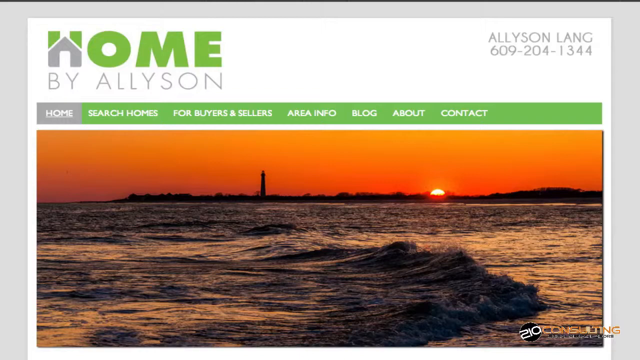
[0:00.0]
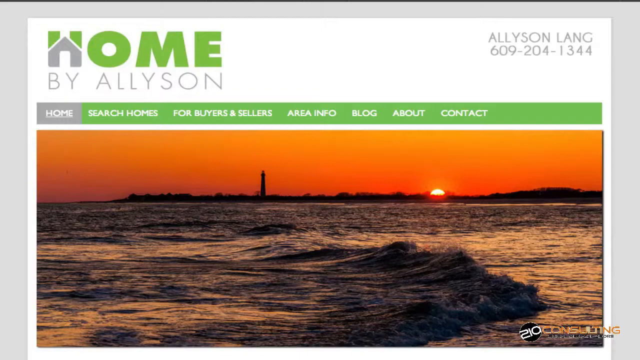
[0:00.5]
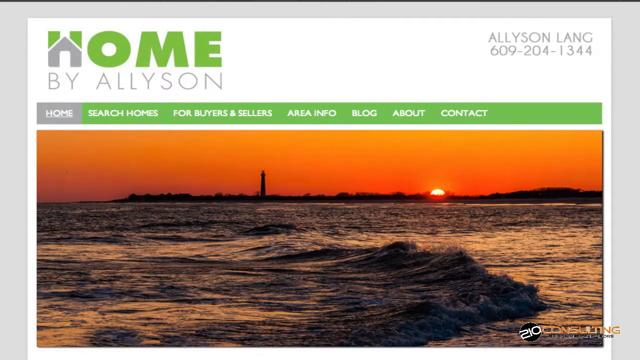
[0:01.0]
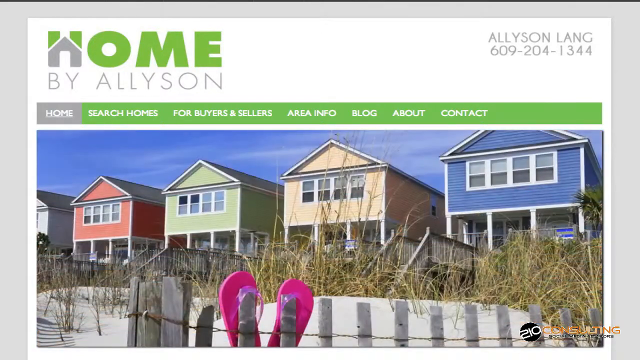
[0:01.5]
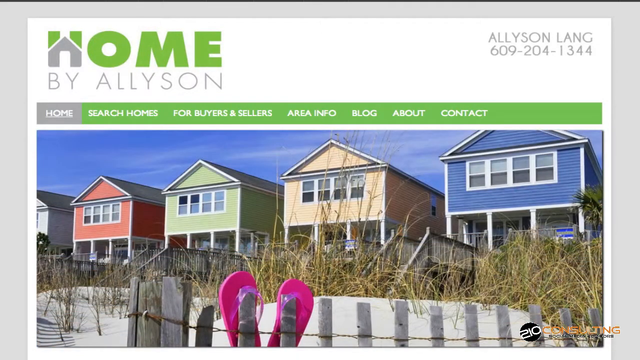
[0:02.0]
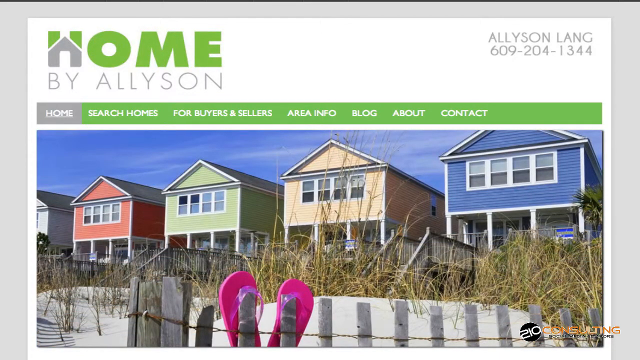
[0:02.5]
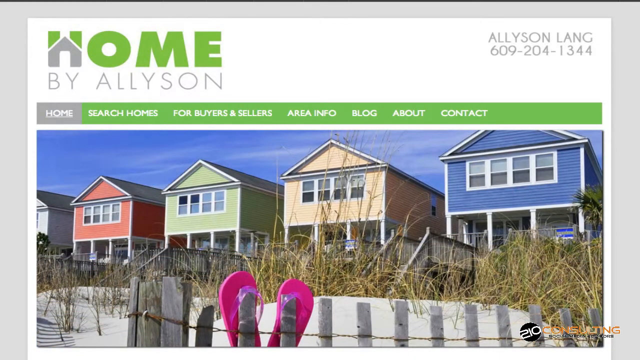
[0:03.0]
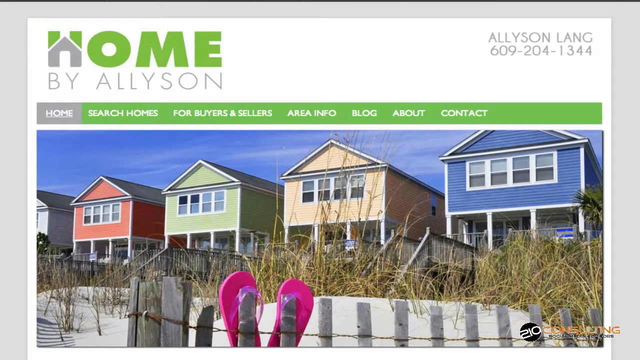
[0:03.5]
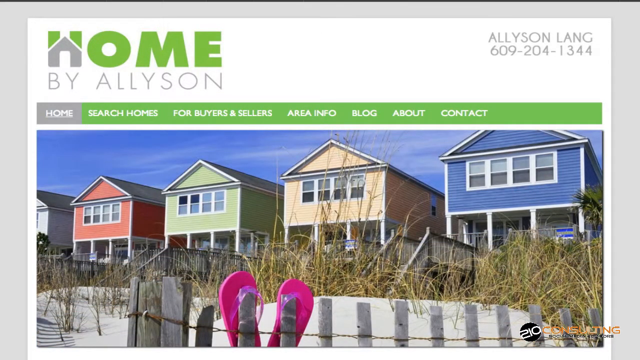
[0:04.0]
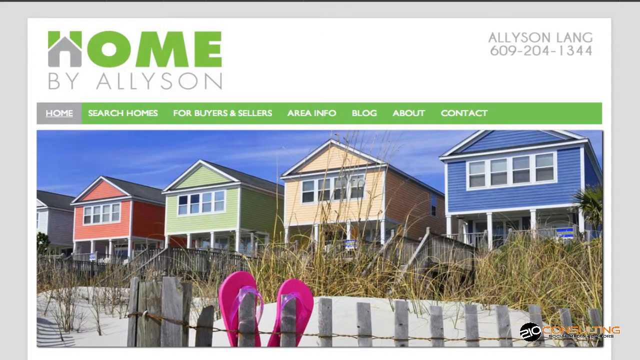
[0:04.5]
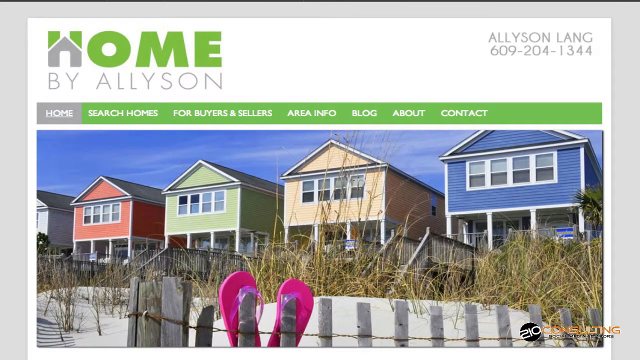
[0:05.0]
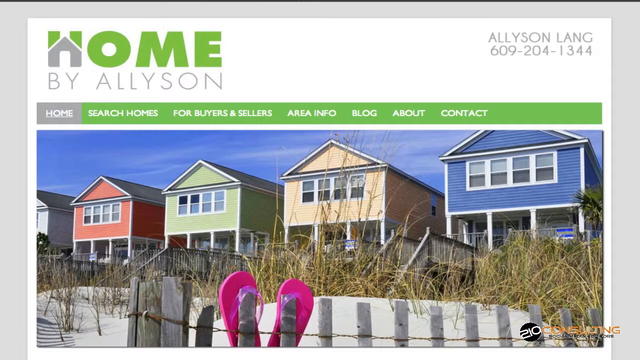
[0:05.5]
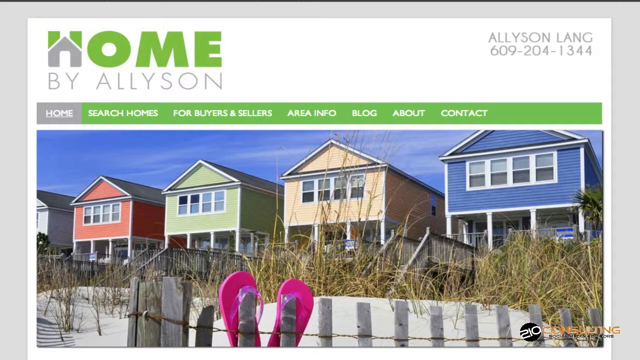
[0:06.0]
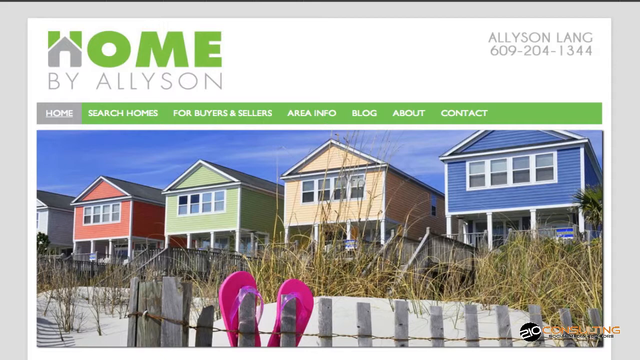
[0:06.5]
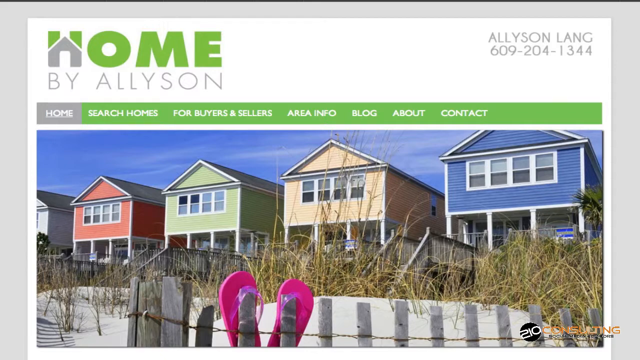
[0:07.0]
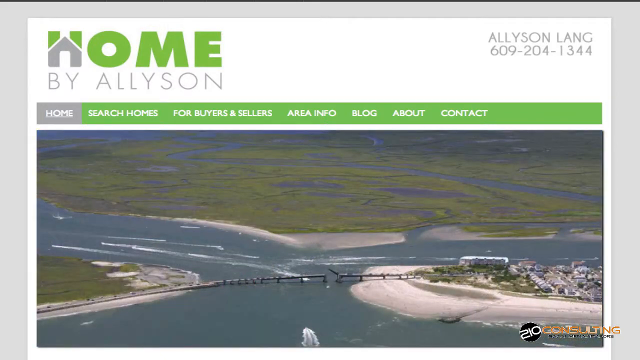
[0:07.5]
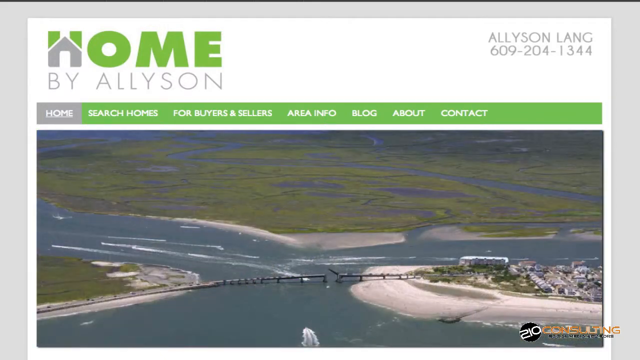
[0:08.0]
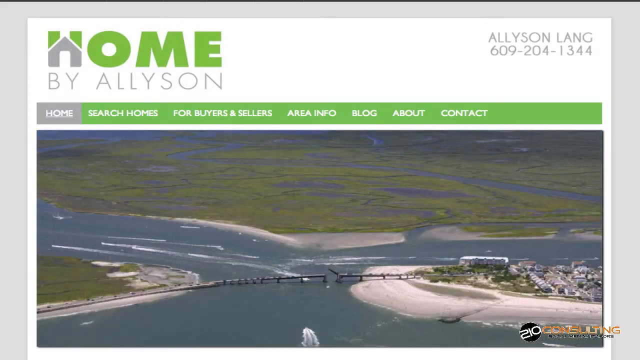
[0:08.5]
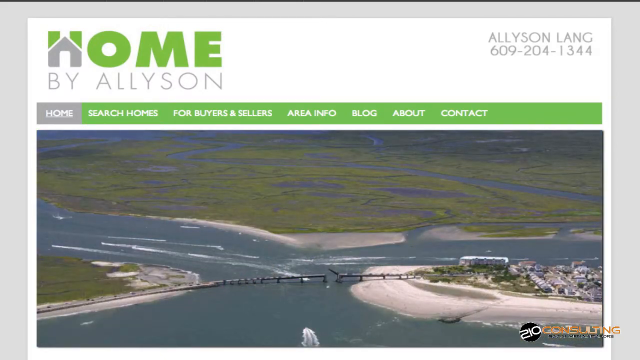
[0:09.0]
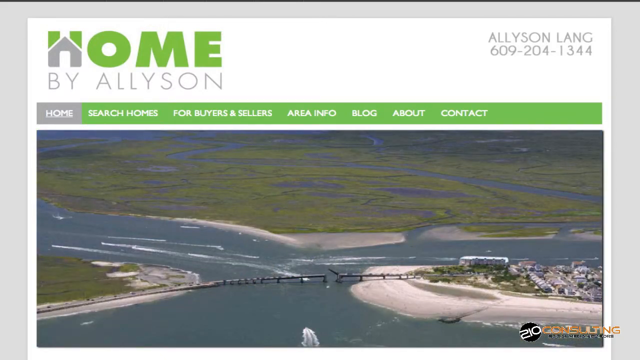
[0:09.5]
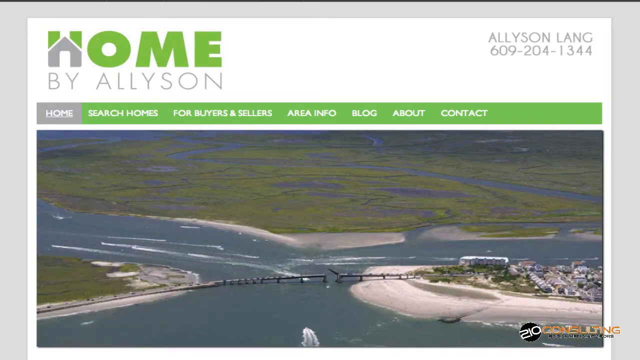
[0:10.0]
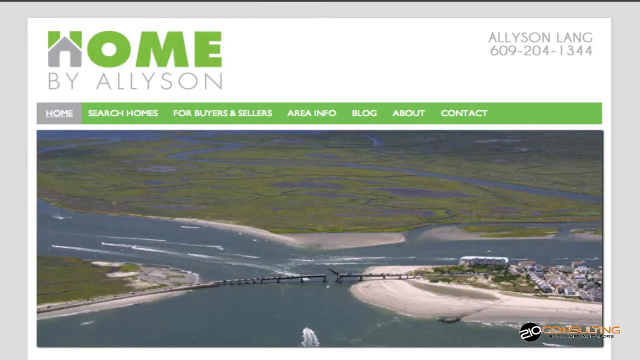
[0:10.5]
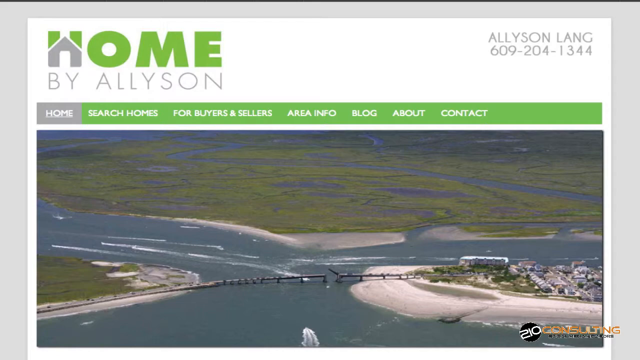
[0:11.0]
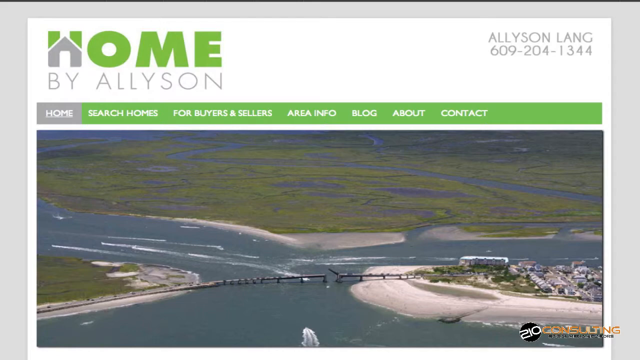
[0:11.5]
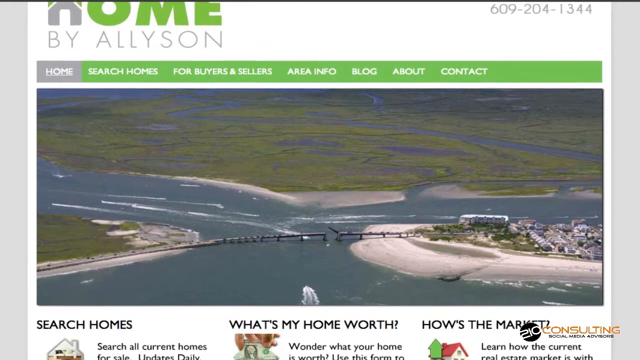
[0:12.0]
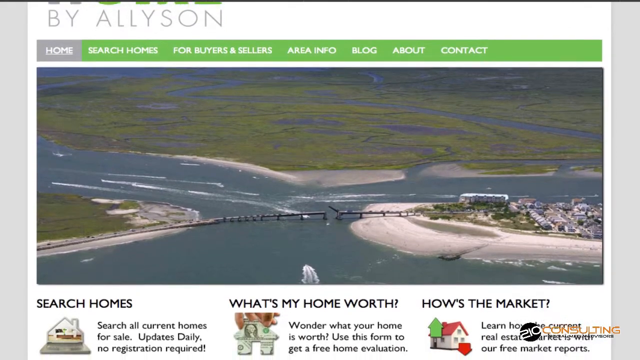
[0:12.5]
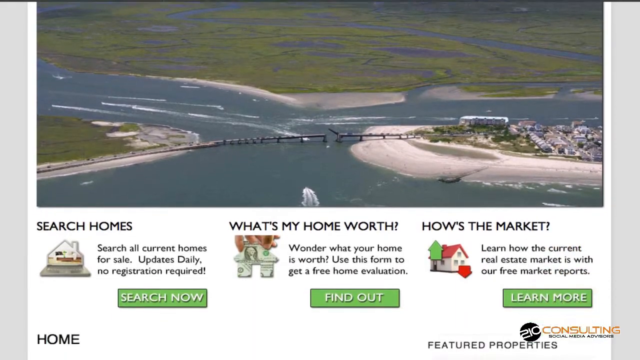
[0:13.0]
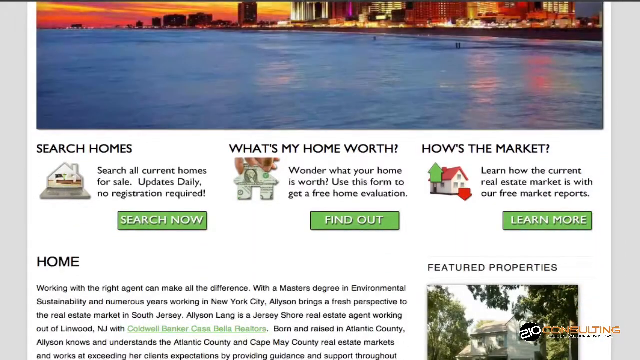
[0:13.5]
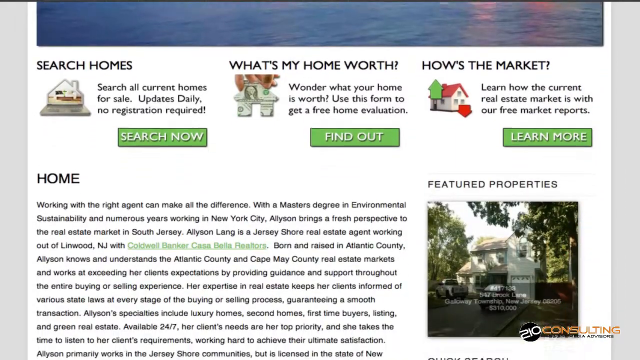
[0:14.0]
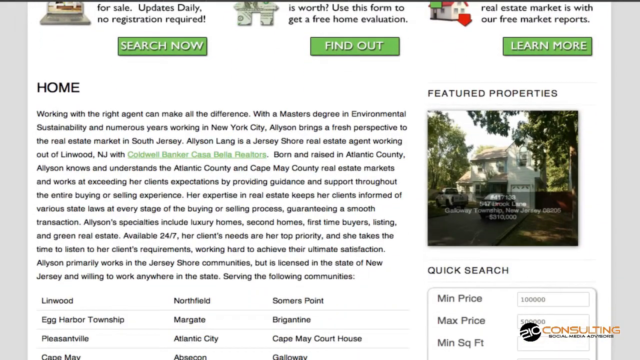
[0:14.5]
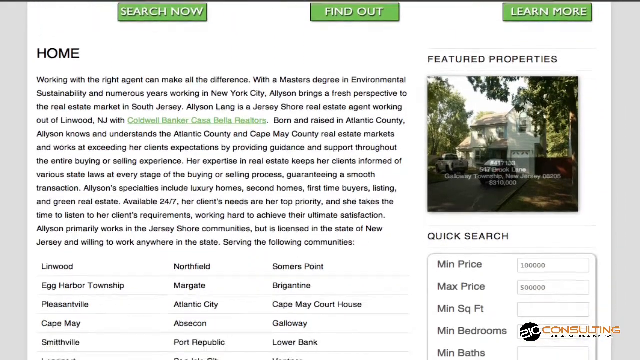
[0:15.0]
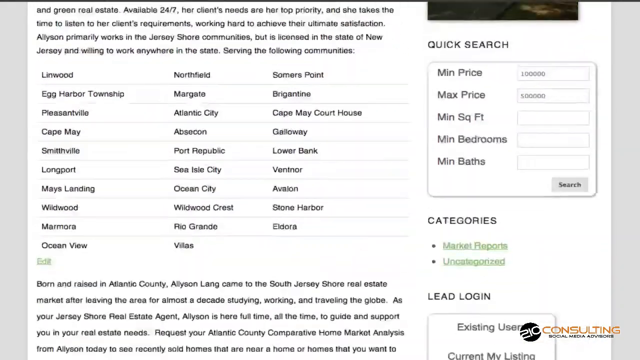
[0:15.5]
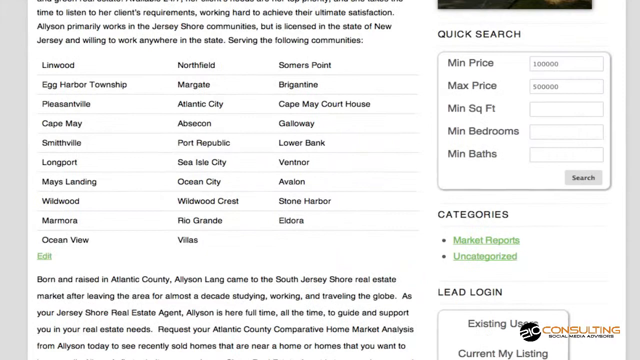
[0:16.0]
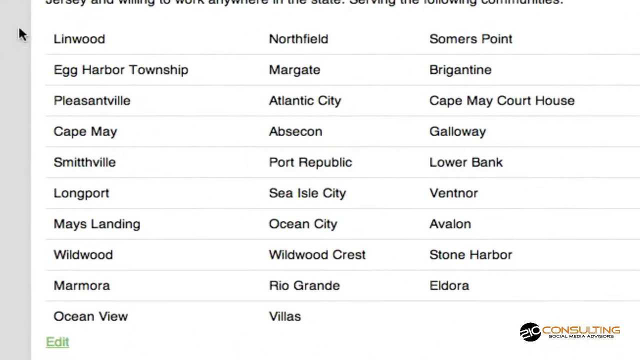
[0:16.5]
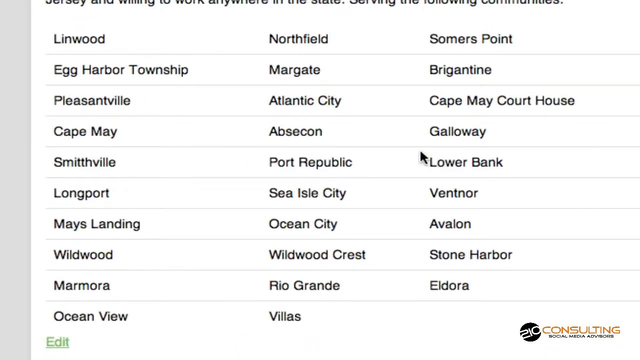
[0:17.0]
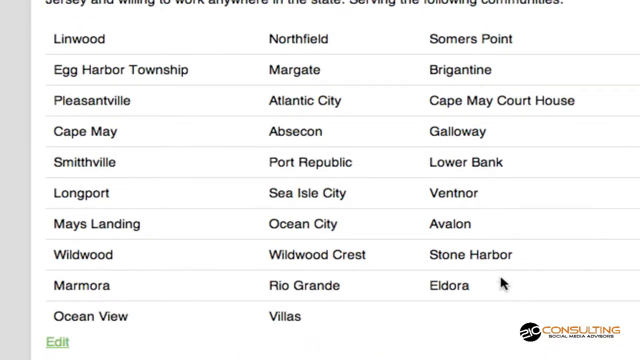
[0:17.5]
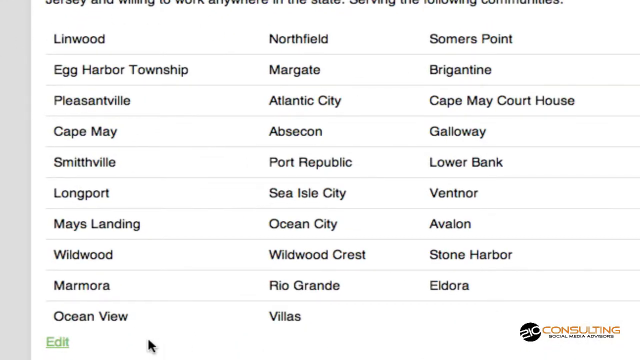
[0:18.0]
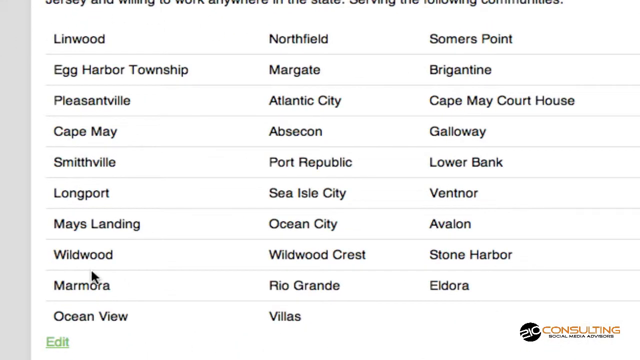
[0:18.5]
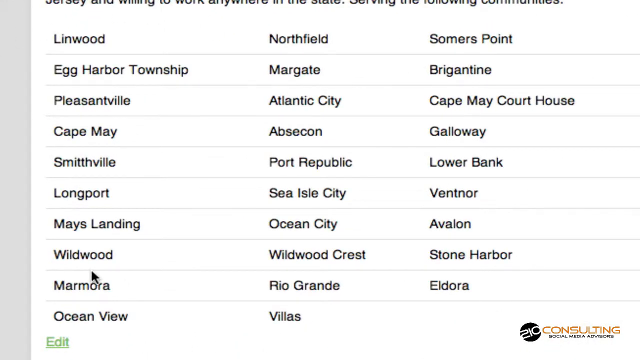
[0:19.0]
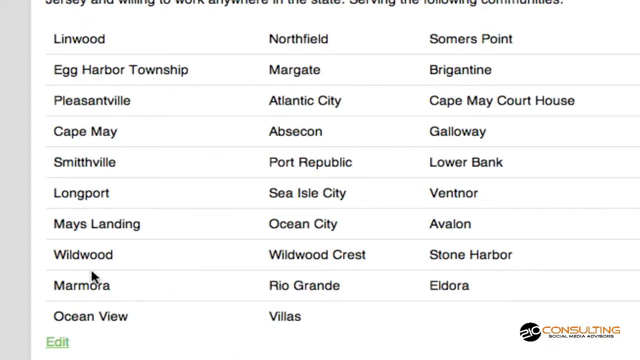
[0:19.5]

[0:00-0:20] The video opens on a web page with a white background. In the upper left corner are the words "home by Allyson". The logo is made up of a gray house, with the top of the H done in green, and the rest of the letters in "home" are green; the words "by Allison" are in light gray. Just beneath this is a menu bar that reads "home, search homes for buyers and sellers, area info, blog about contact". Underneath that is a beach scene at sunset with a bright orange sky, the outline of a lighthouse on the shoreline, and mostly peaceful water with one small wave in the middle. Allyson Lang's name and phone number are in the upper right corner. Next comes a row of beach homes. At the far left, just the corner of a white two-story home is visible. Next to it is a red house with four windows and white pillars, then a green house with the same four windows and four white pillars, then a yellow house, also with four windows and four white pillars, and finally a blue house identical to the others, with four windows and four pillars. Each home has a wooden walkway leading down to the sandy beach, and various plants grow up from the sand in front of the houses. After that comes navigation for Allyson's web page, with various options such as searching homes and searching specific towns or areas.